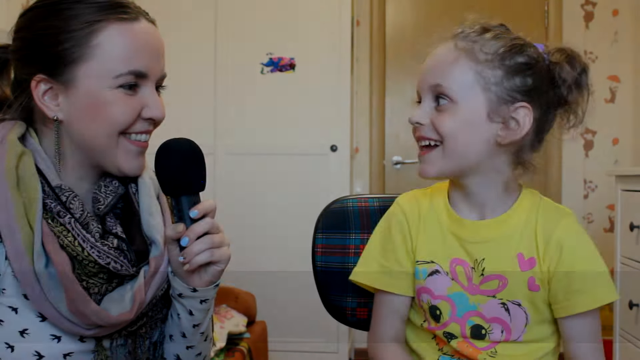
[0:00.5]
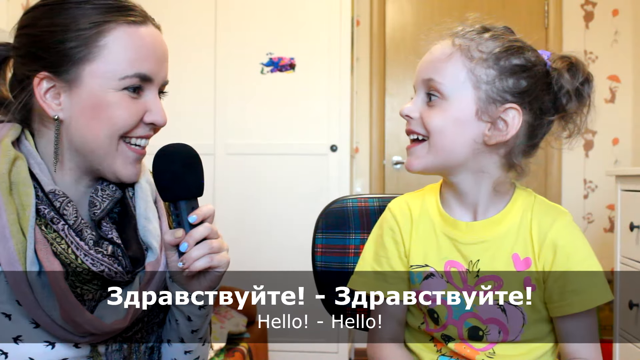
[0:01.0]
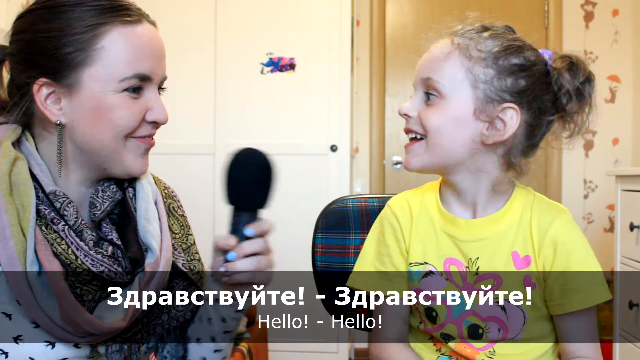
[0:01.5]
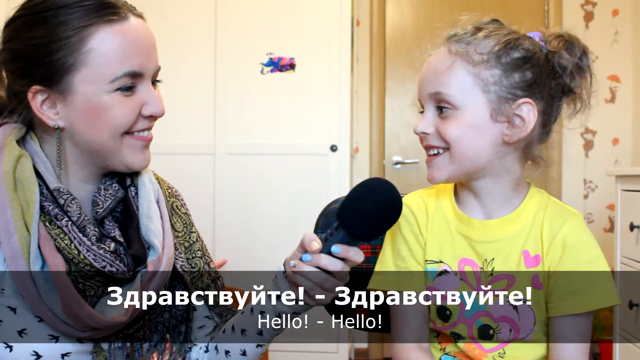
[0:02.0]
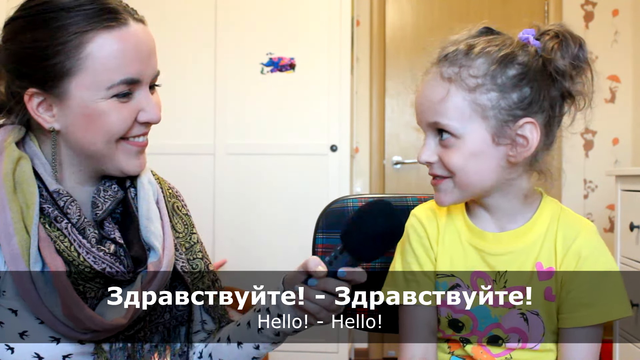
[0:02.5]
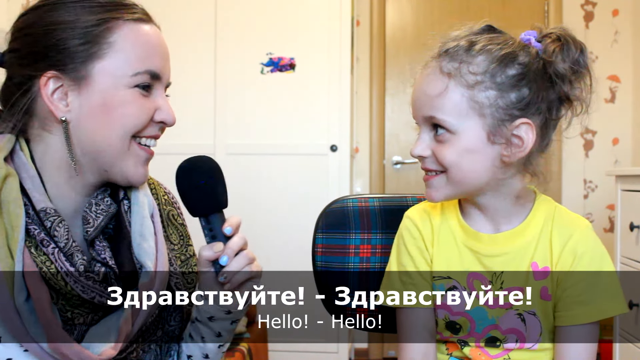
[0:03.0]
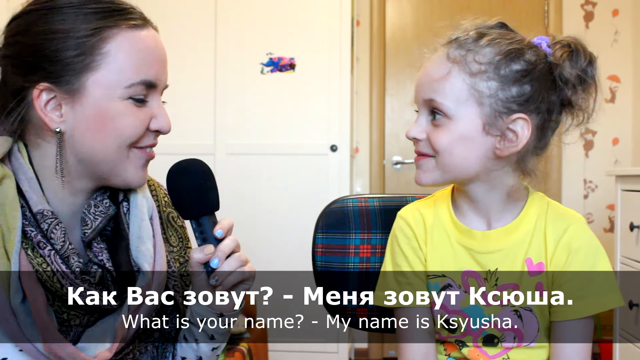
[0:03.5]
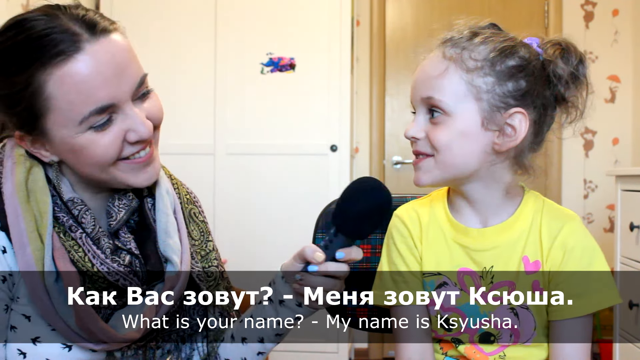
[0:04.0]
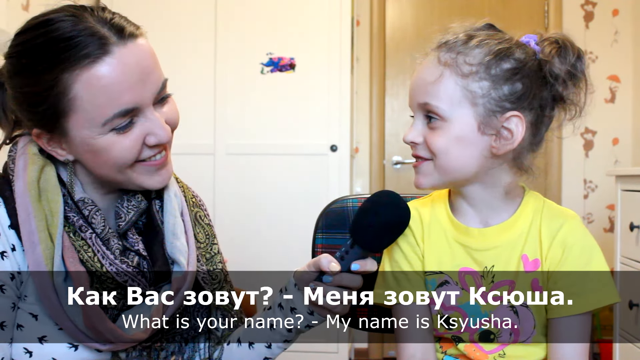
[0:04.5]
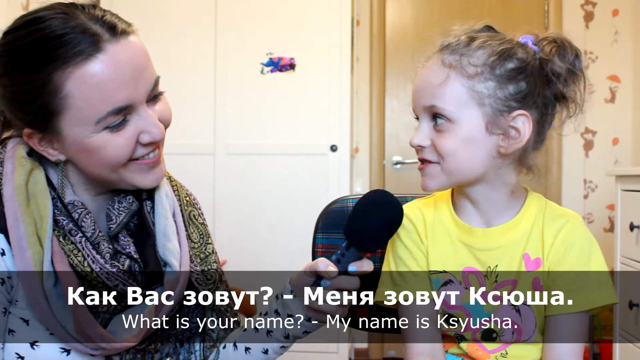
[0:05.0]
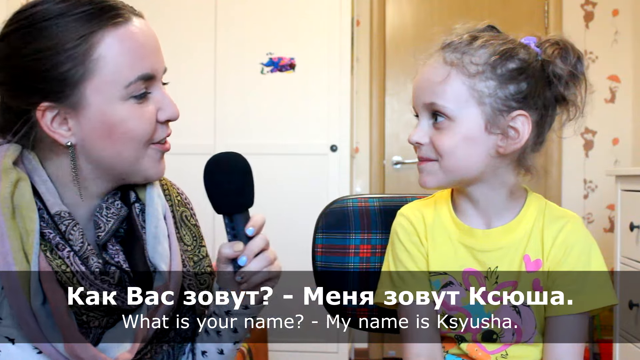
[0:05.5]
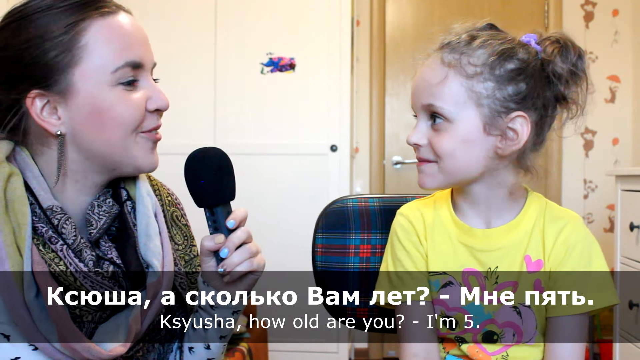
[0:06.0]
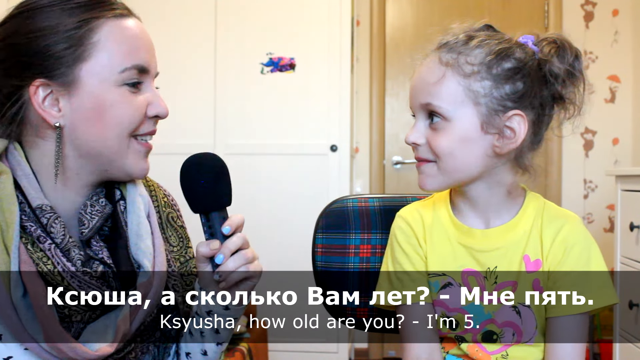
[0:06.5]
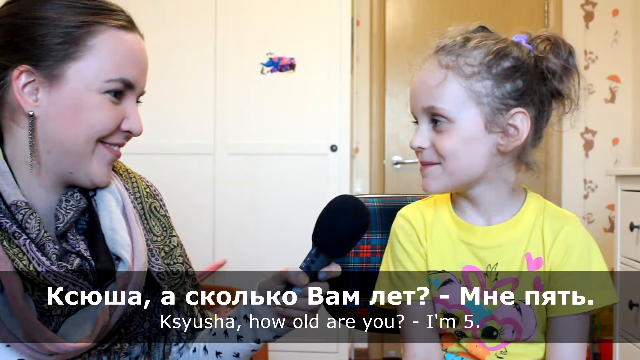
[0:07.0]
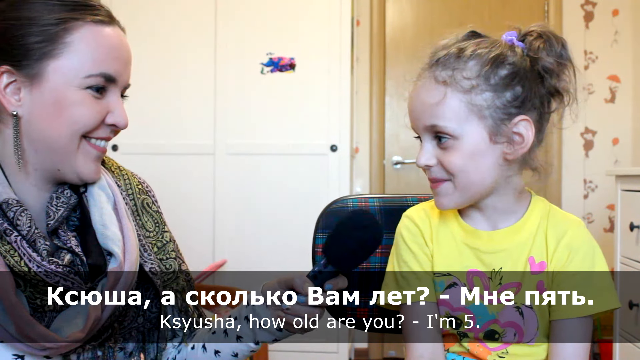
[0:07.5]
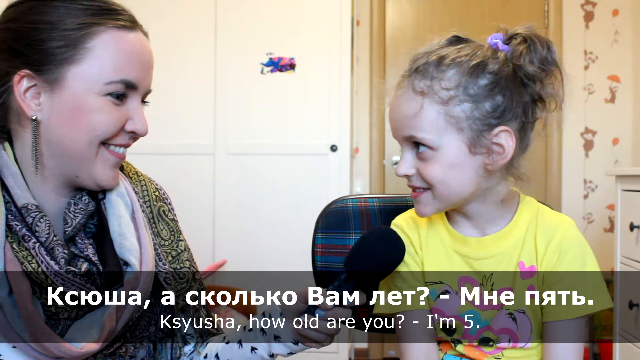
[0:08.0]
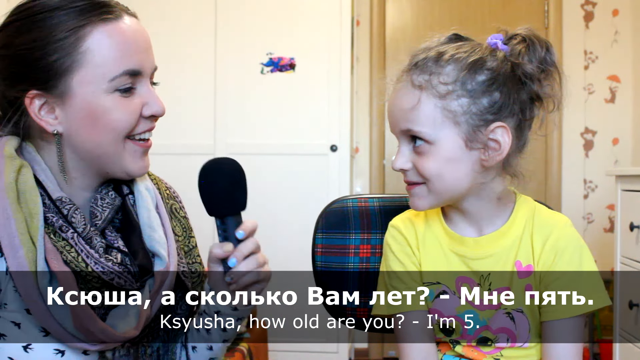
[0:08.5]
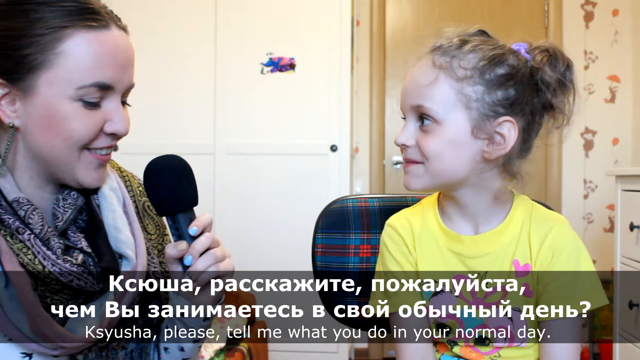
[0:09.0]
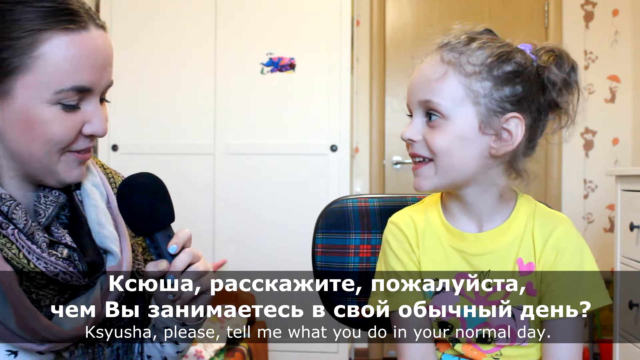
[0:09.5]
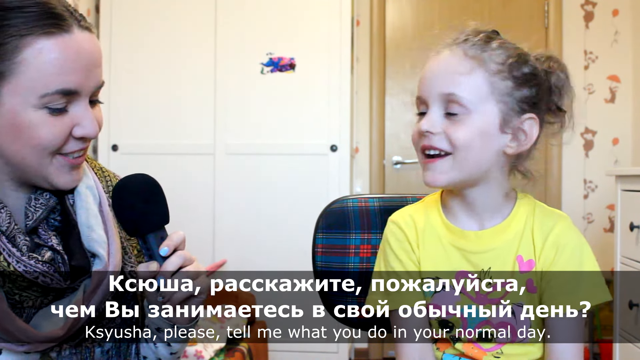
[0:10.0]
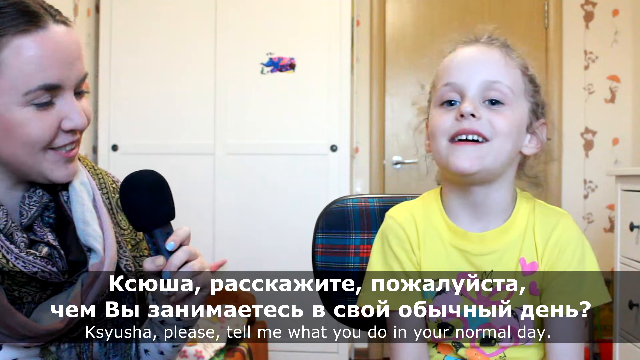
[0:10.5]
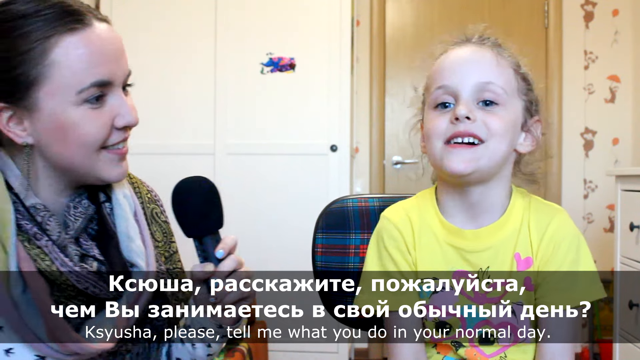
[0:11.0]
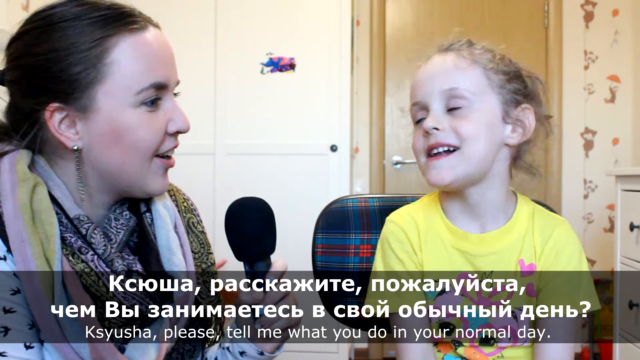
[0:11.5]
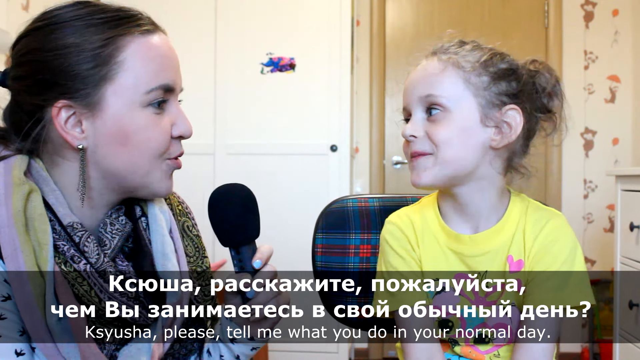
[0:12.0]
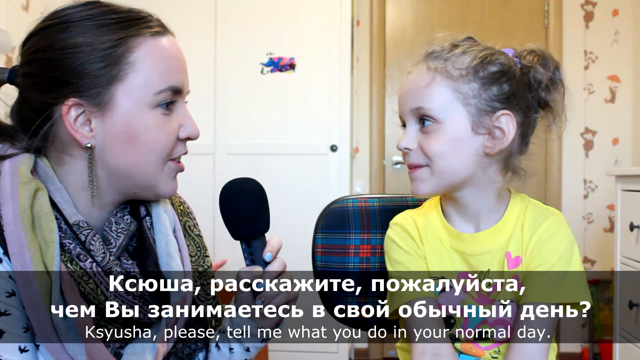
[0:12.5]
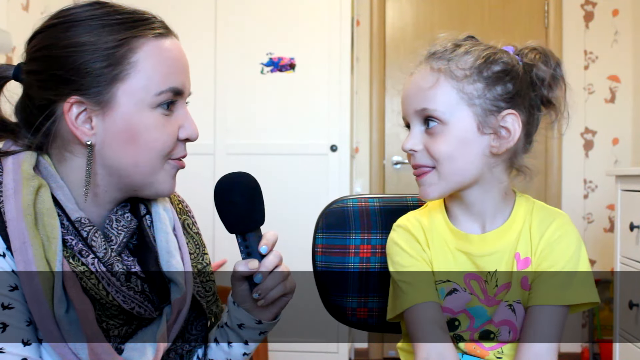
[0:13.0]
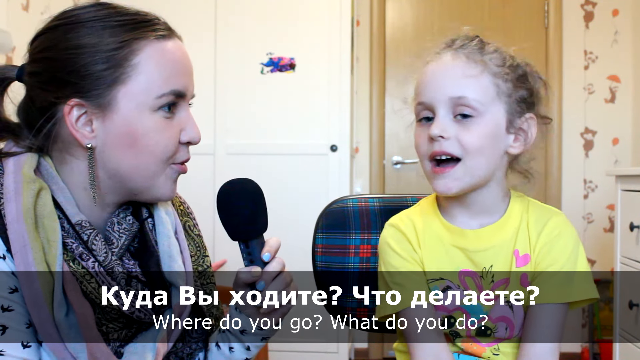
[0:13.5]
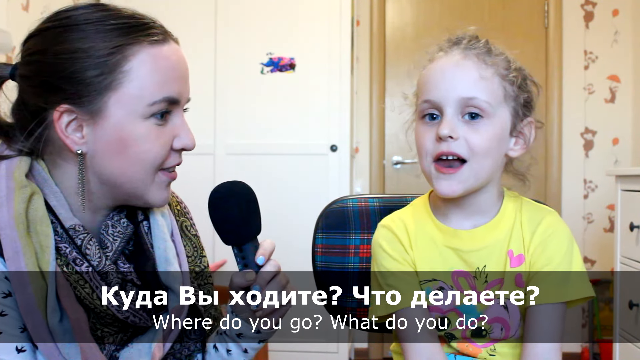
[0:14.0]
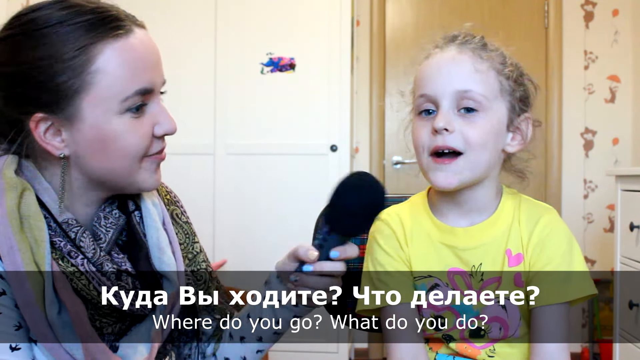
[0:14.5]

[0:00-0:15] A woman, maybe in her 30s, and a young girl who looks about five are shown fairly close up, both visible from about the chest up. They are inside a room that looks like it may be a playroom or a classroom, with stickers of some kind on the wall and everything brightly colored. The woman holds a microphone and interviews the girl. A black box across the bottom of the frame shows what is apparently the transcript of the conversation, in Russian above and an English translation below. The woman says hello and hands the microphone to the girl, who says hello. The woman asks her name and the girl answers, then the woman asks questions such as how old she is, what she does on a normal day and where she is going. The woman wears a long-sleeve printed shirt, dangly earrings and a multicolored scarf around her neck. The girl wears a bright yellow shirt with a bright pink cartoon animal on it, maybe a tiger or possibly a dog, along with hearts; the subtitles cover much of the bottom of the image. Both are smiling, the girl giggles, and they look like they are having a good time.